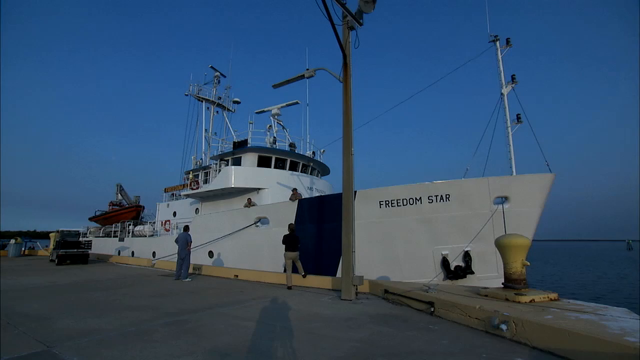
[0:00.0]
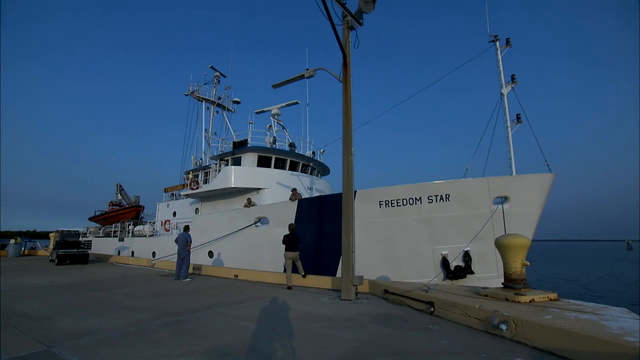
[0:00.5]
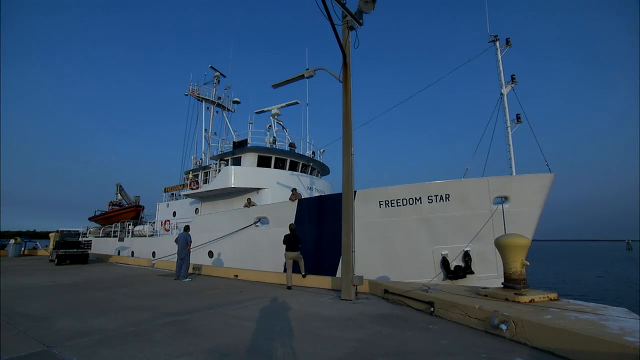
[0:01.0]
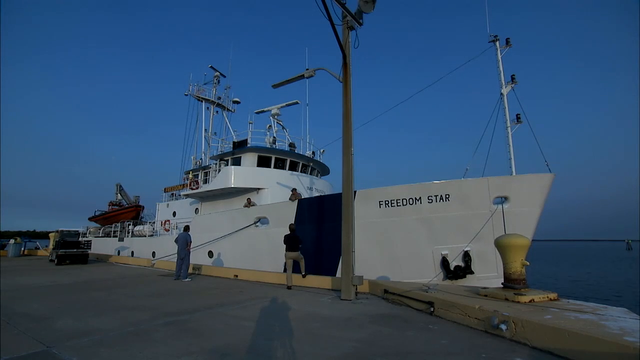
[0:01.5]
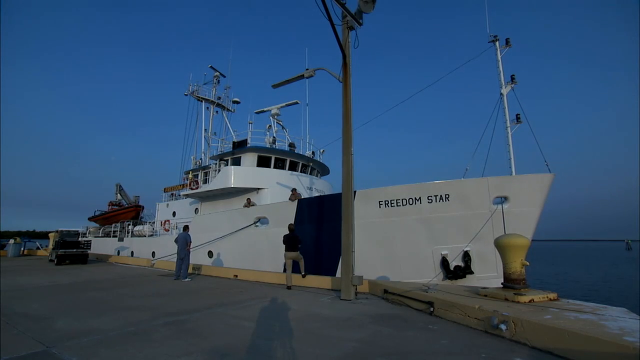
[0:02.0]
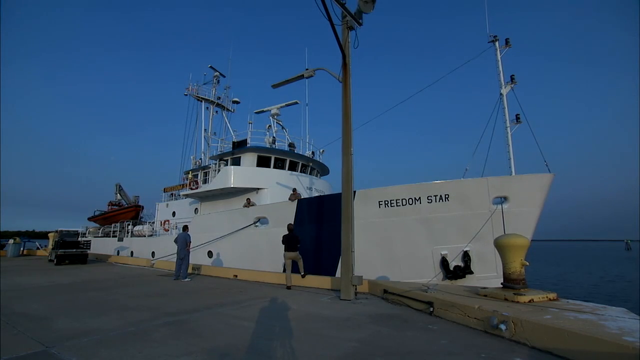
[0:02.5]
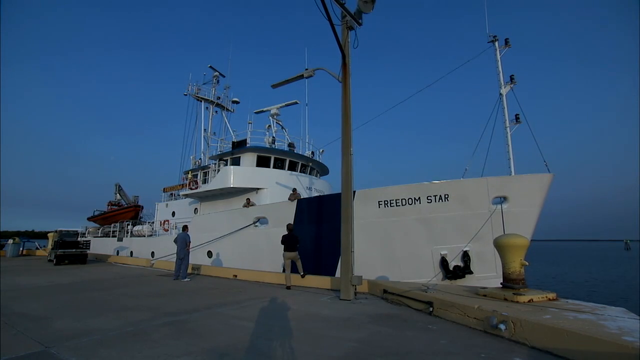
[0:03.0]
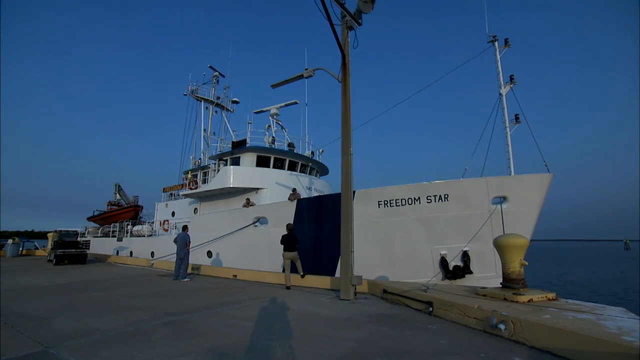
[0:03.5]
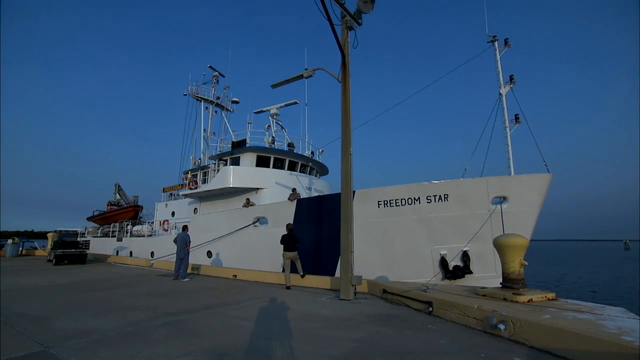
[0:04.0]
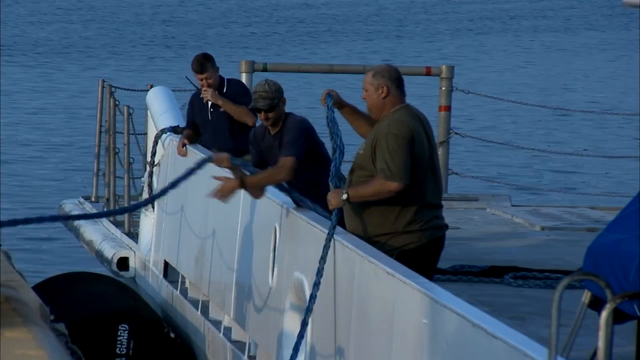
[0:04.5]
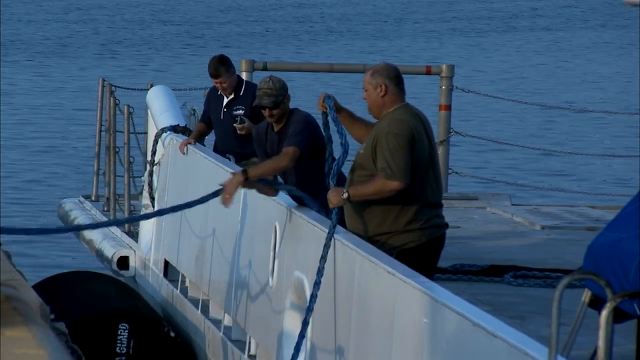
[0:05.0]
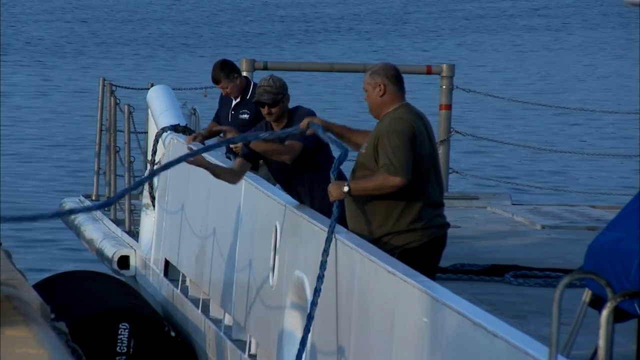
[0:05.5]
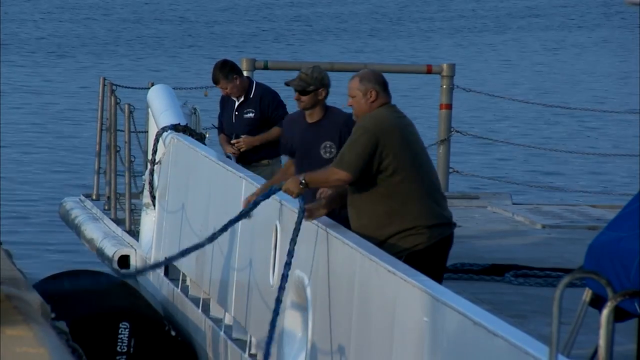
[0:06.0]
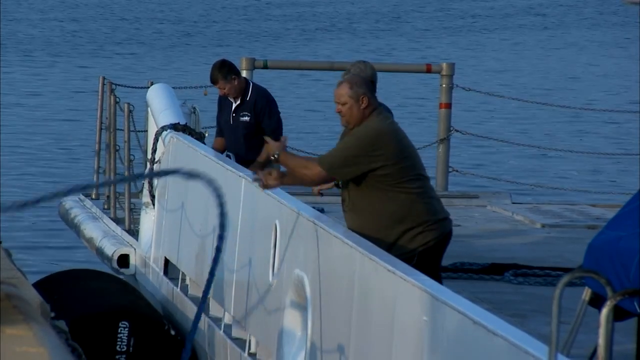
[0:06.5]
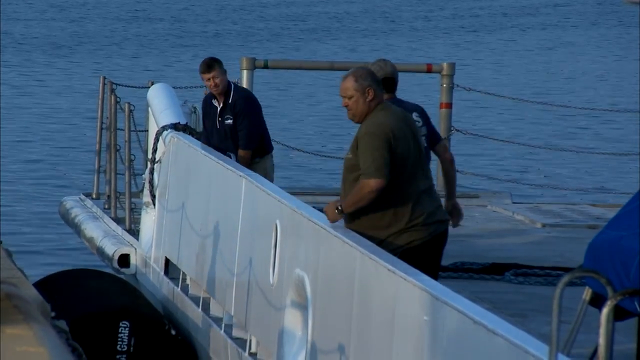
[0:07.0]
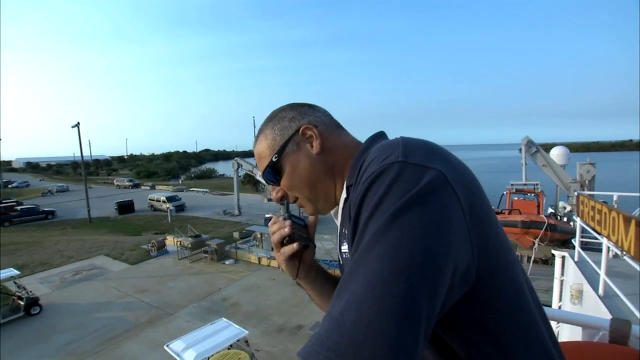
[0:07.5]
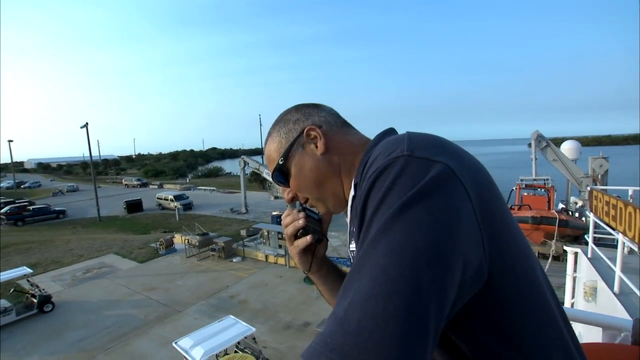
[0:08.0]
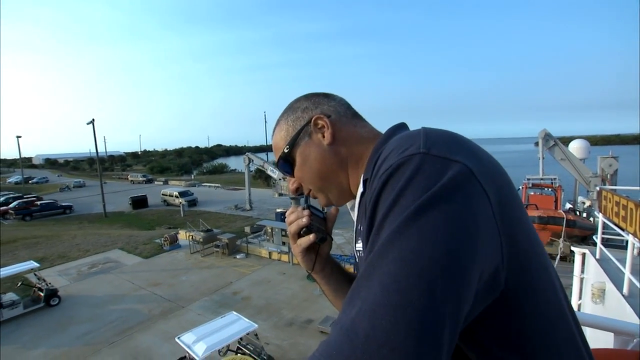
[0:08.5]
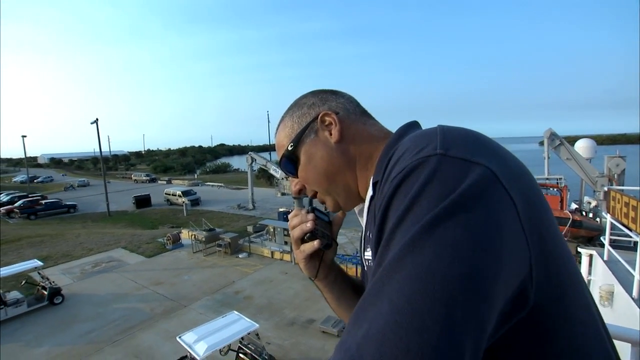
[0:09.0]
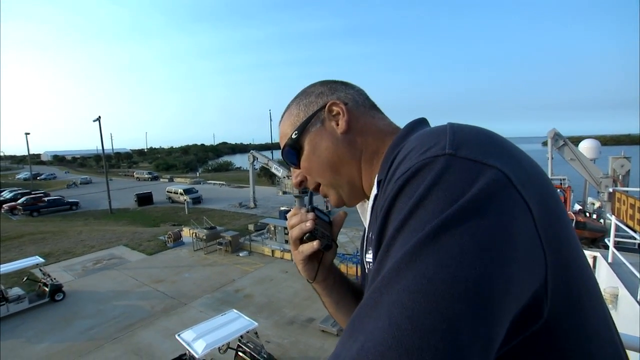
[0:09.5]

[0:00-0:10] A very large ship is docked, with a little of the sea in the background and blue sky above. "freedom star" is written in black text on its side; the ship is mostly white with a large vertical blue stripe. Two men on the dock look towards the ship, and a couple of people look down from the ship. A close-up shows some men who appear to be untying the ship from the dock: one of them handles a blue rope, kind of untying it and throwing it towards the dock. Three men are on the edge of the boat, with a white railing reaching up to their midsections; all wear dark shirts, and the one in the middle has sunglasses and a hat. Next comes a close-up of a man talking on a walkie-talkie. He wears a blue sweatshirt and black sunglasses and has shaved, kind of black hair. He seems to be up on the boat, since blue sky and the sea are in the background, but the view looks over a parking lot with some parked cars, apparently the view from the ship.